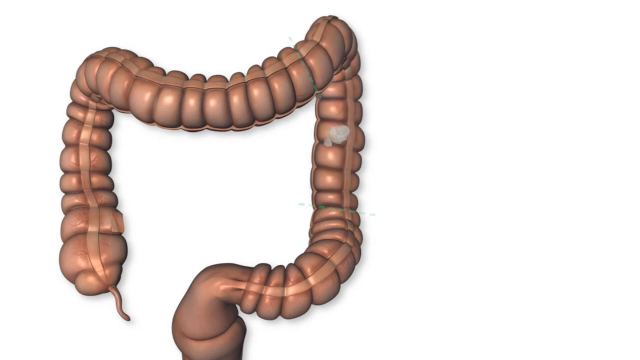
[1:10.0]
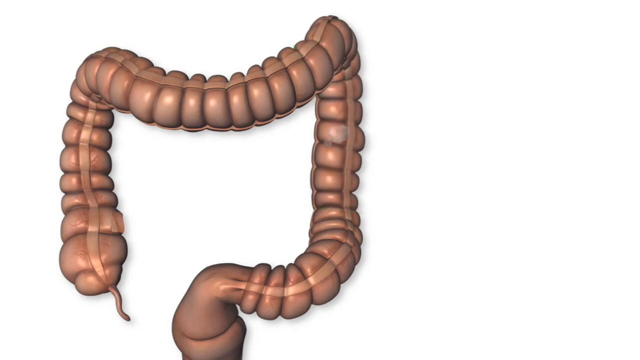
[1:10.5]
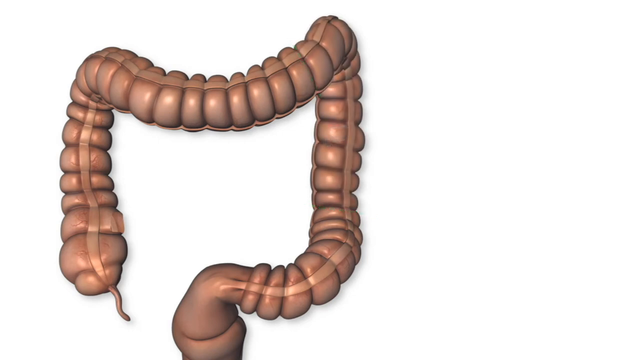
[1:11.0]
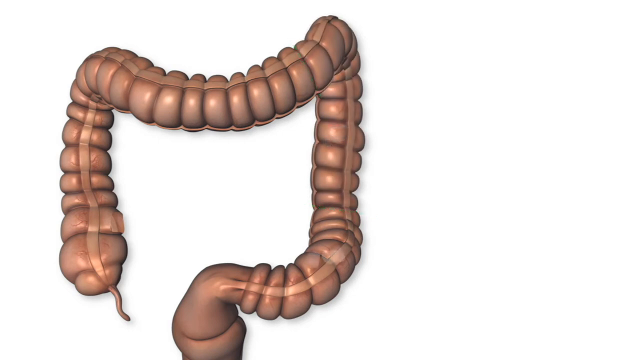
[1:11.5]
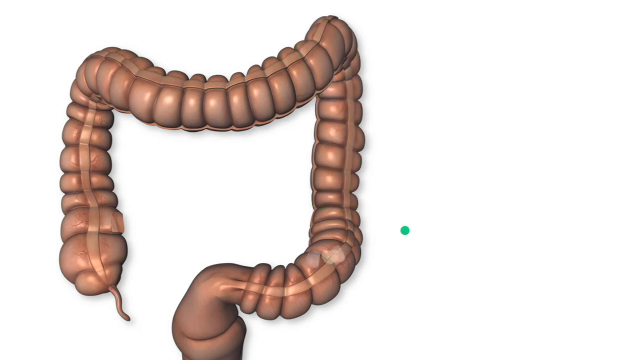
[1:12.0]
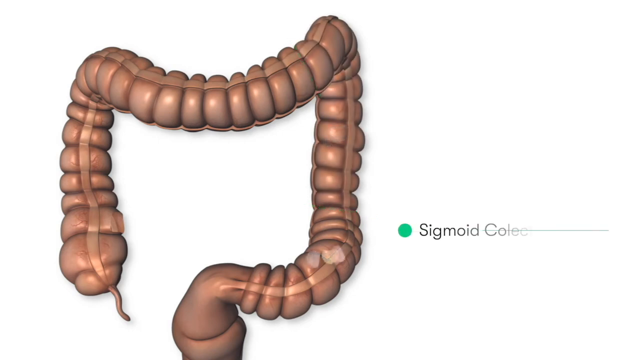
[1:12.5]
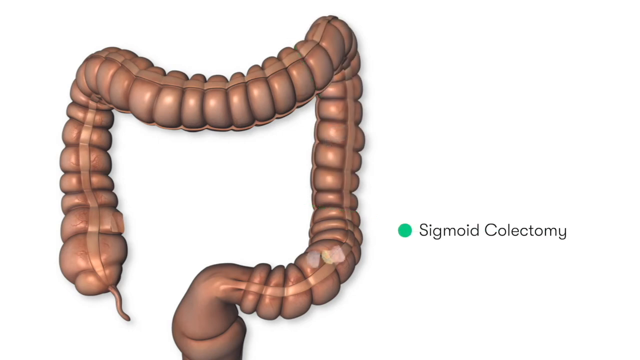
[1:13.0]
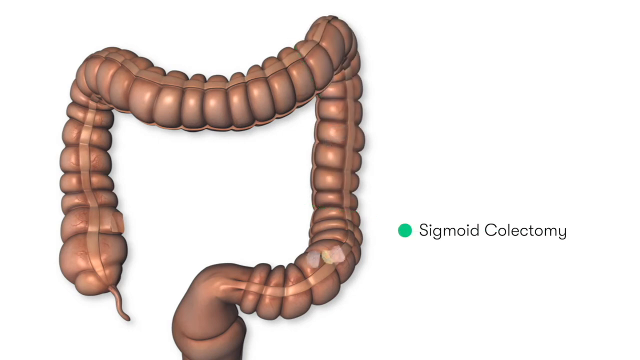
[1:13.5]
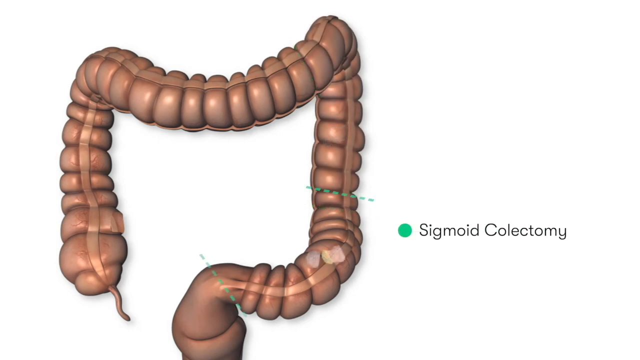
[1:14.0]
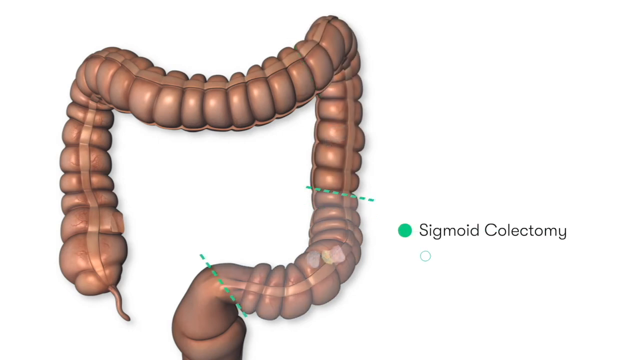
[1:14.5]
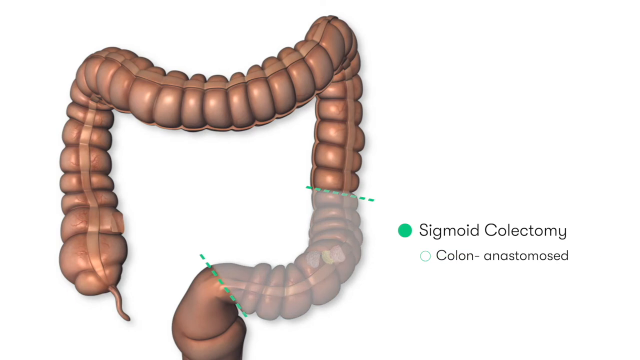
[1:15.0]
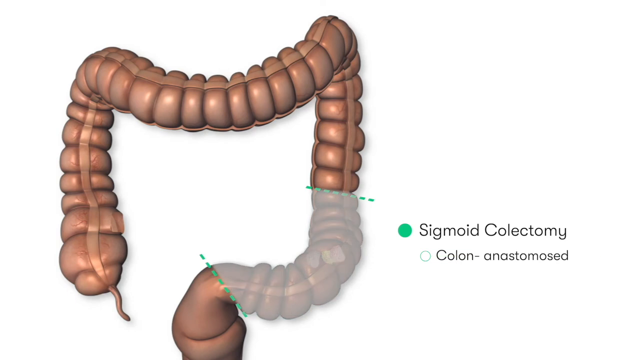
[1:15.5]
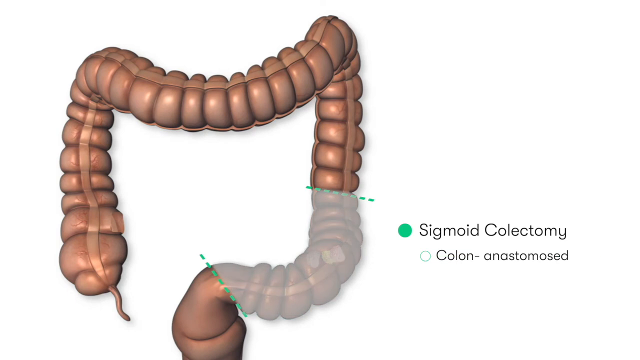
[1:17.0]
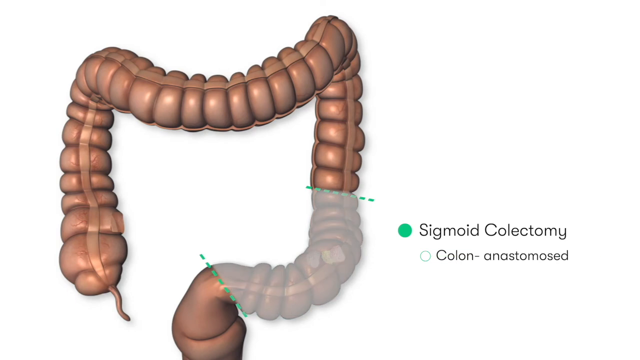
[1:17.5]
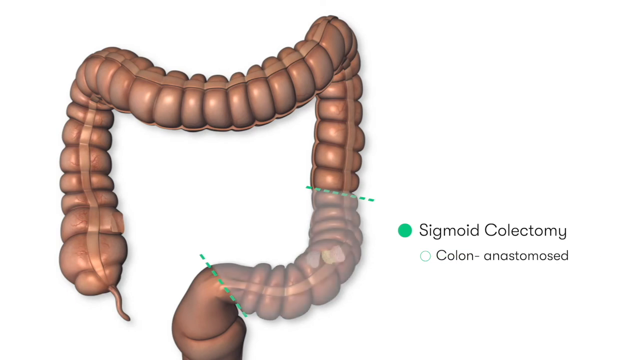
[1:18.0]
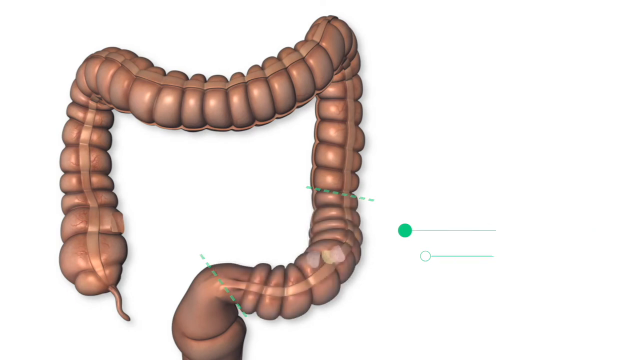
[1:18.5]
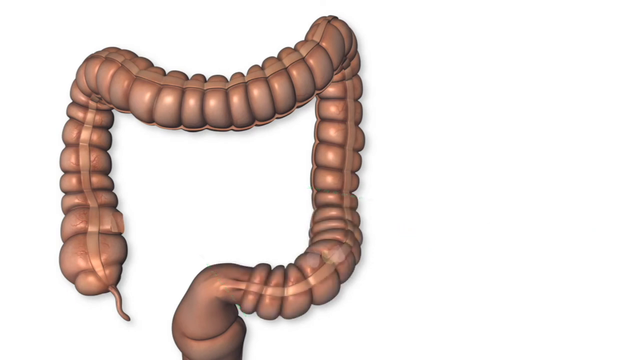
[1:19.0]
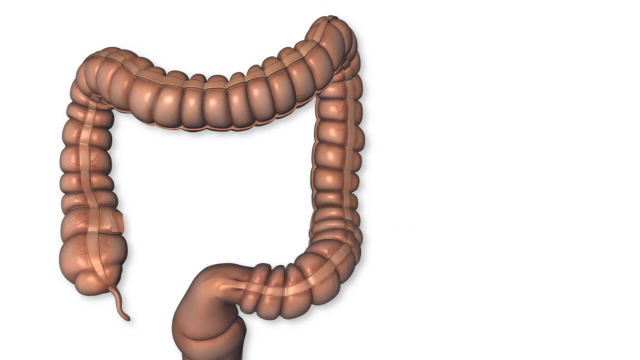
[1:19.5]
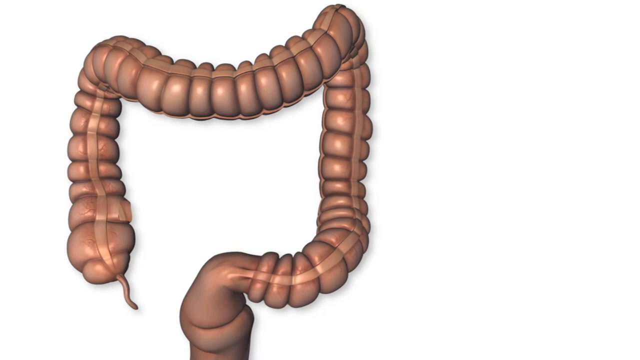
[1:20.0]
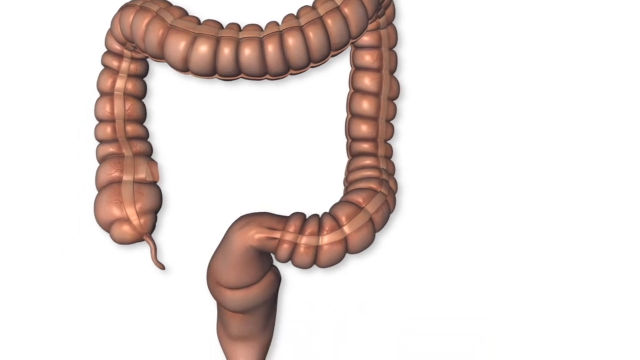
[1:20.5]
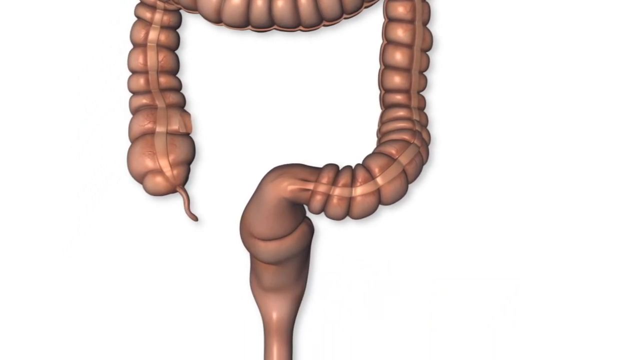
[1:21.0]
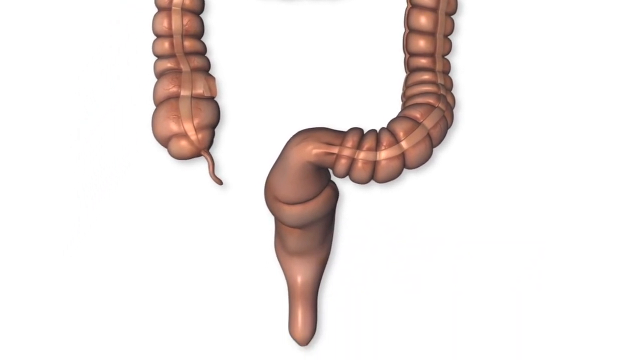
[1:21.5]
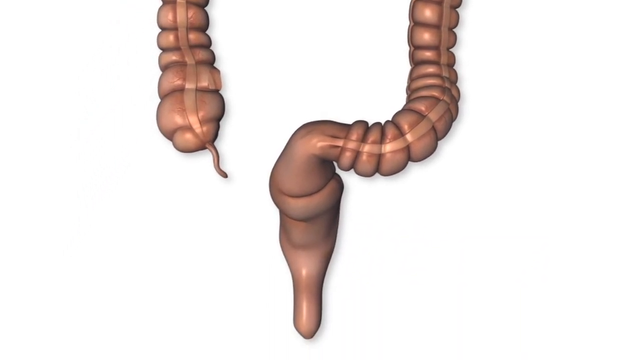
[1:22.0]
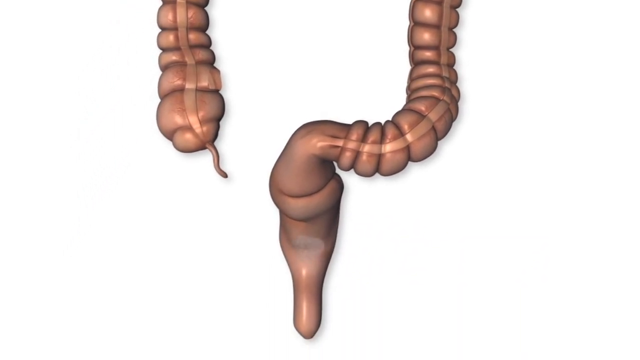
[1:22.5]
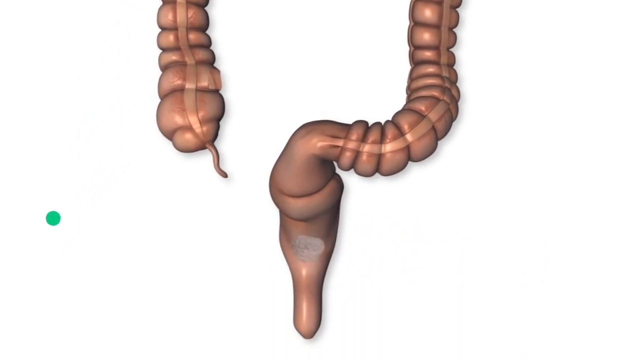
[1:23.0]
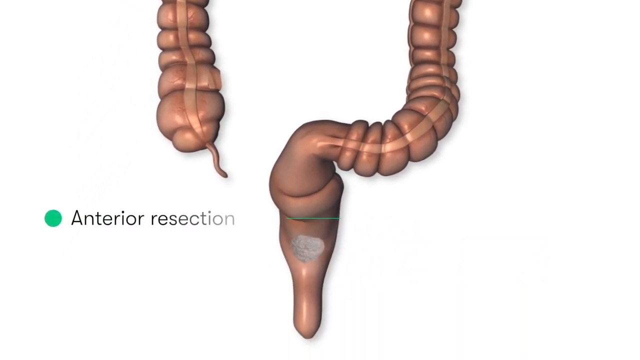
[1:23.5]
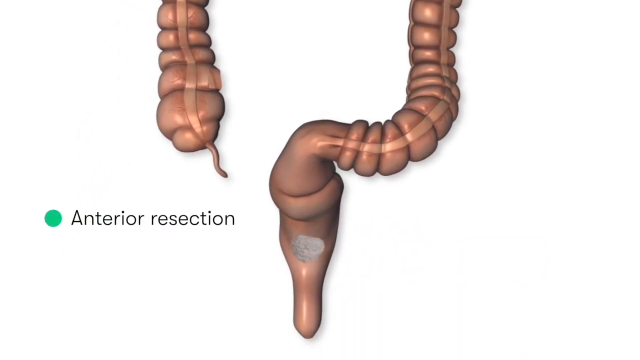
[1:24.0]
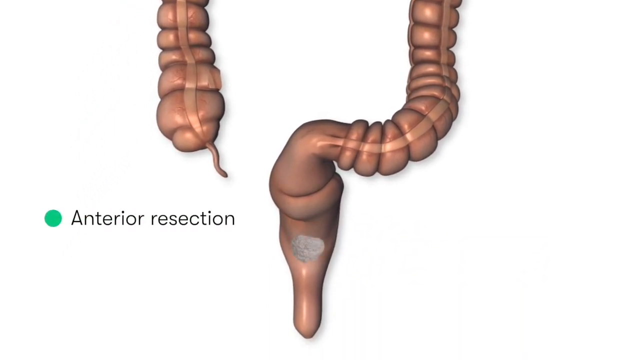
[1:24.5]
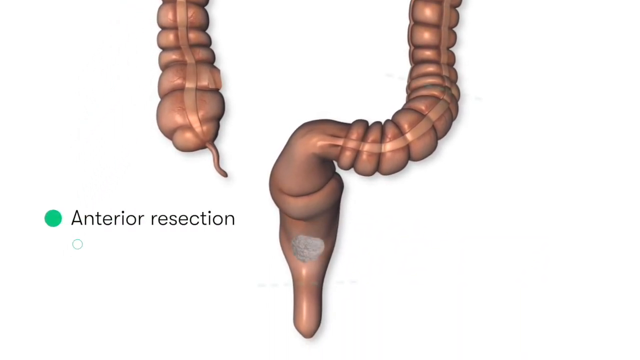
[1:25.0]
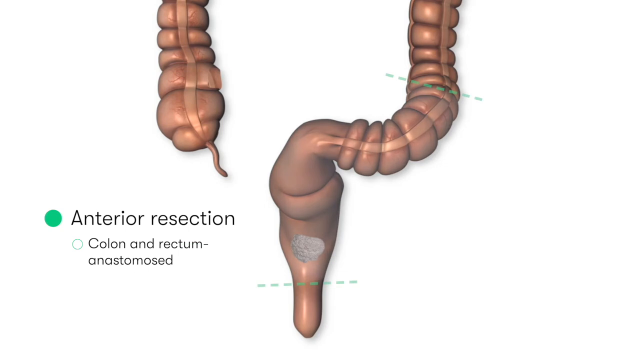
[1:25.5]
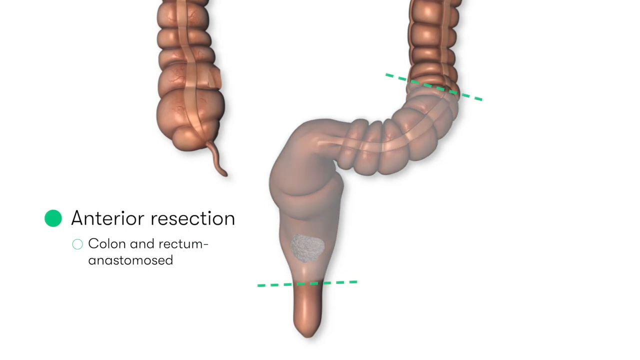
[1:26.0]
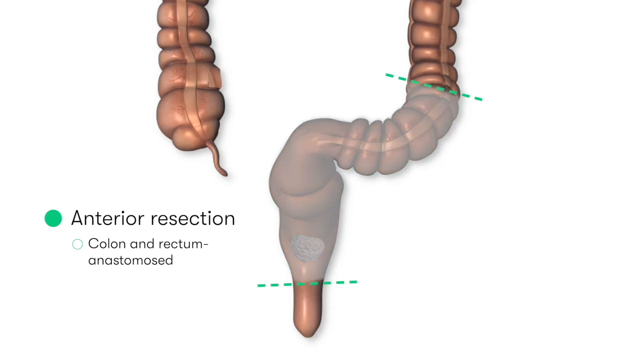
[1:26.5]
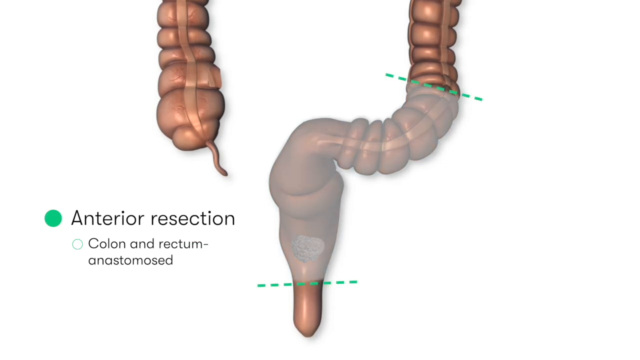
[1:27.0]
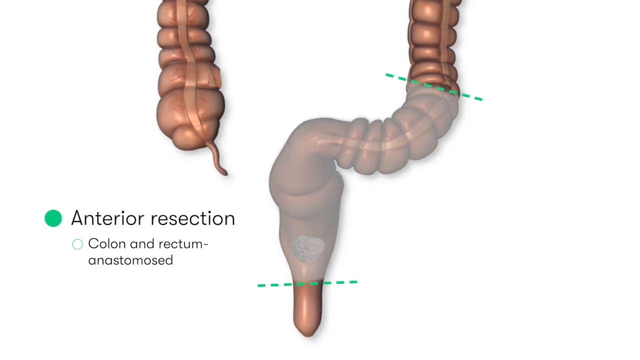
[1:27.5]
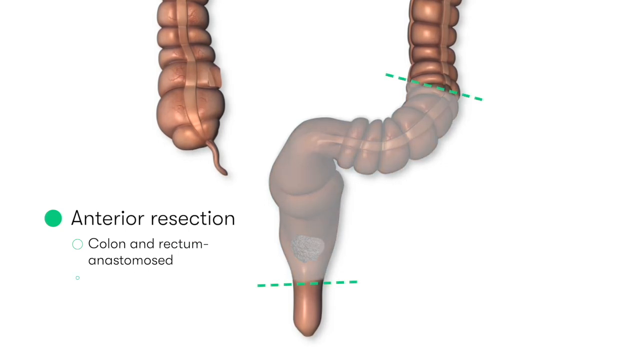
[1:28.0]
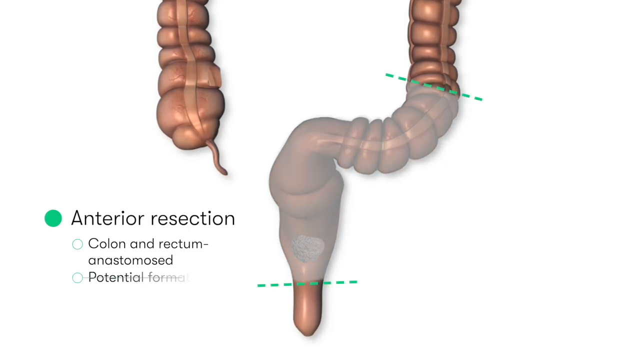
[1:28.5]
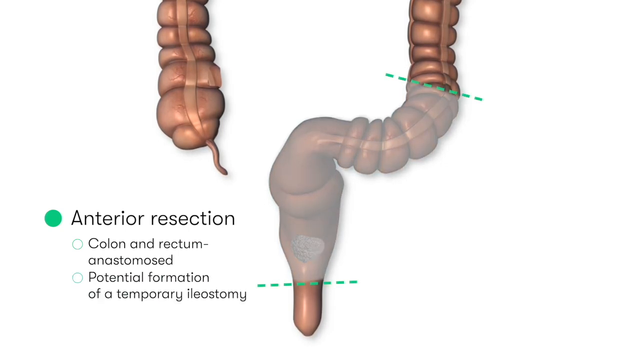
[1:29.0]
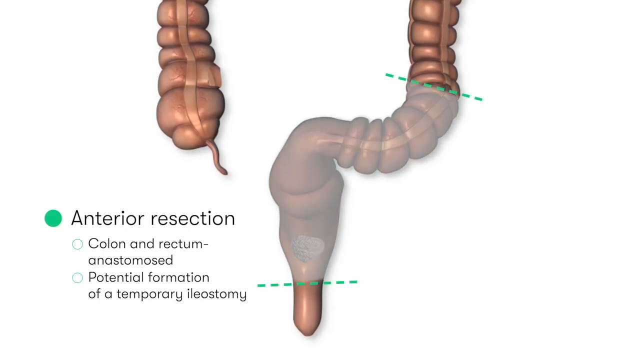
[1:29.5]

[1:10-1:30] On a white screen, the interior body part, which looks realistic but is a 3D model, sort of appears on the left side of the screen. On the right side, a bullet point reads "sigmoid colectomy," with "colon anastomose" beneath it. Spaced-out green dotted lines appear on the mid sections of the 3D model. The view then pans downwards, and on the left side of the screen another bullet point reads "anterior resection," with "colon and rectum anastomose" below it. Green dotted lines continue to appear on the model, and more text appears: "potential formation of a temporary ileostomy."